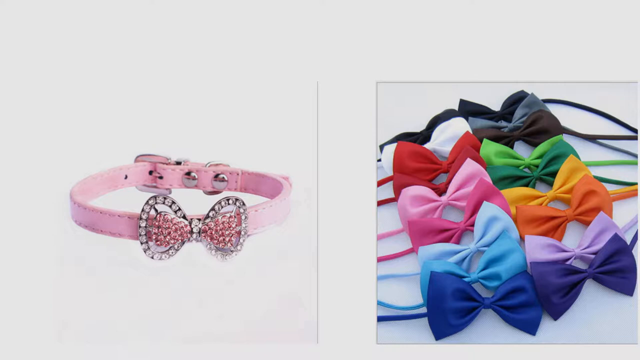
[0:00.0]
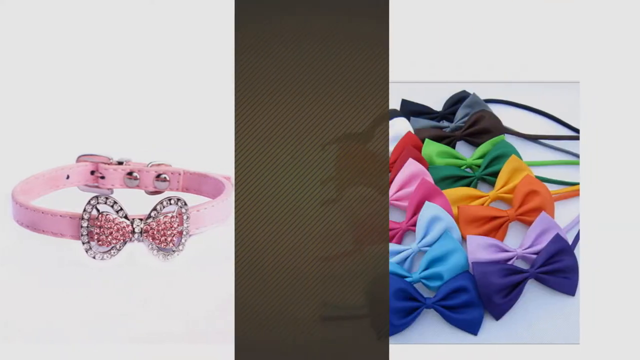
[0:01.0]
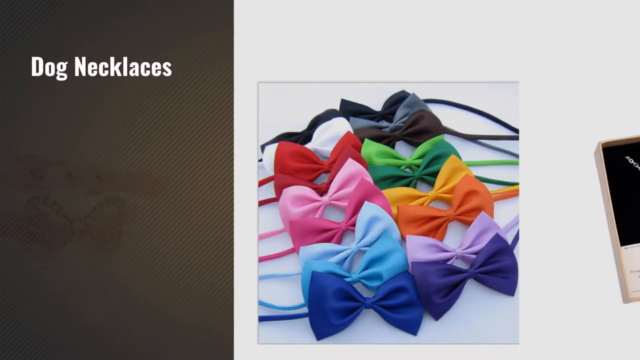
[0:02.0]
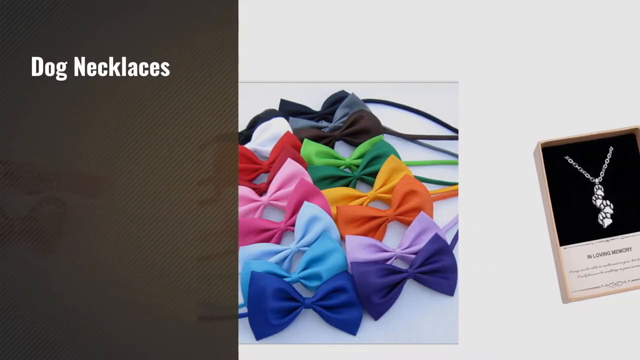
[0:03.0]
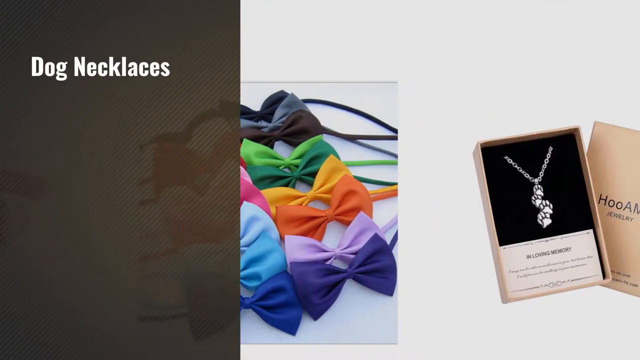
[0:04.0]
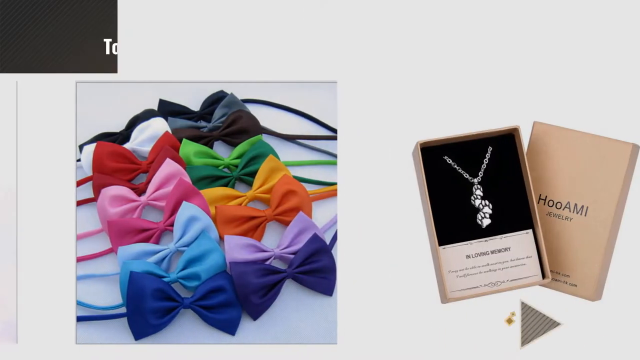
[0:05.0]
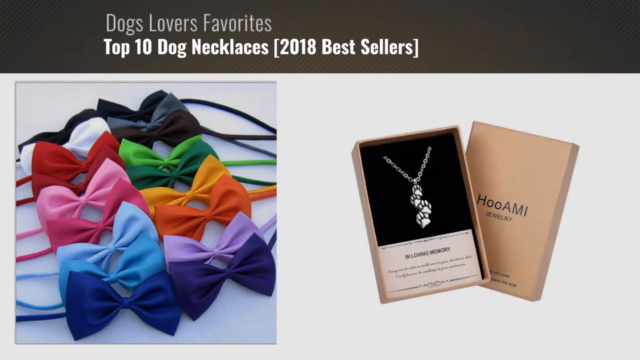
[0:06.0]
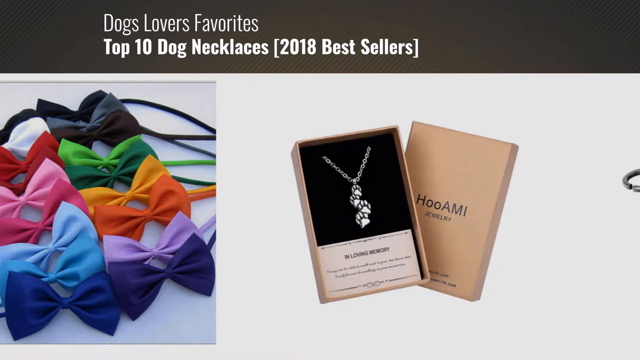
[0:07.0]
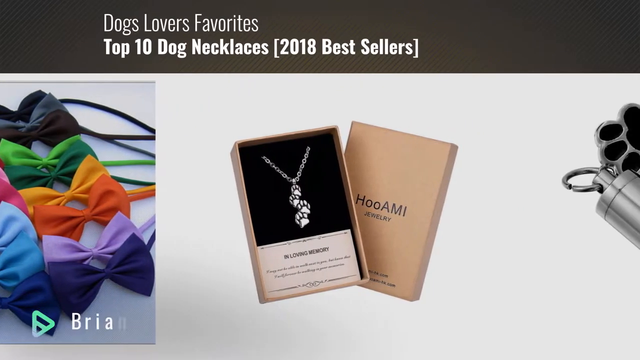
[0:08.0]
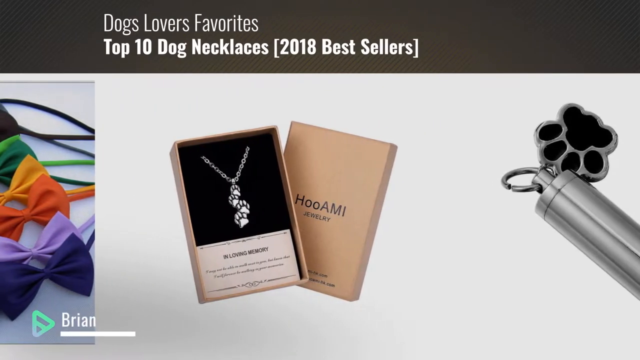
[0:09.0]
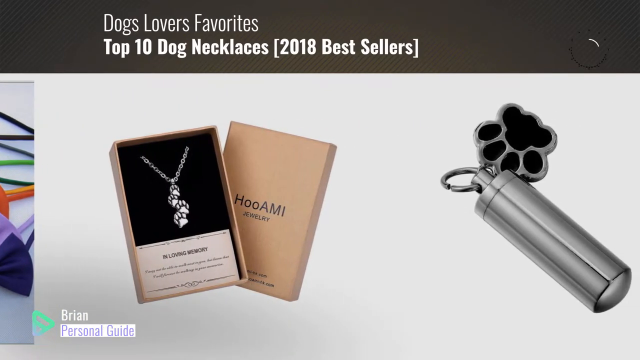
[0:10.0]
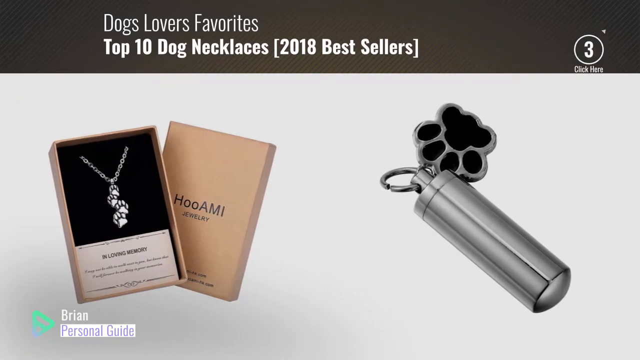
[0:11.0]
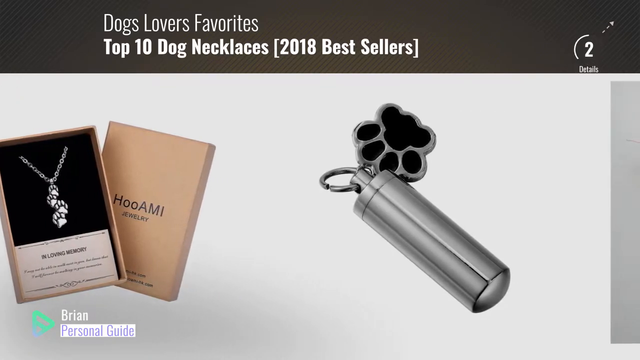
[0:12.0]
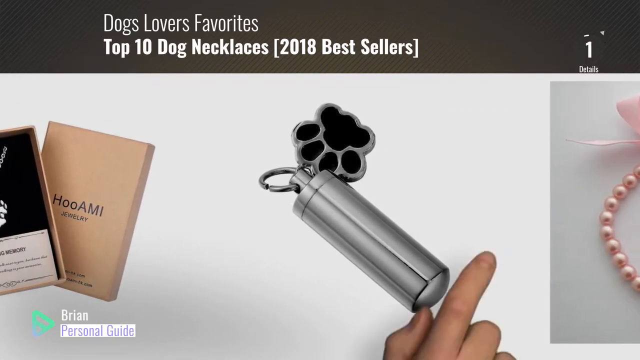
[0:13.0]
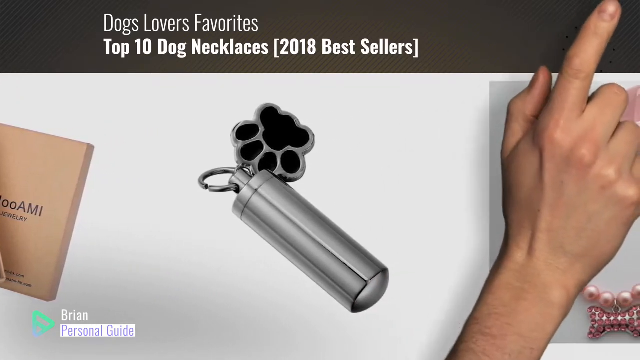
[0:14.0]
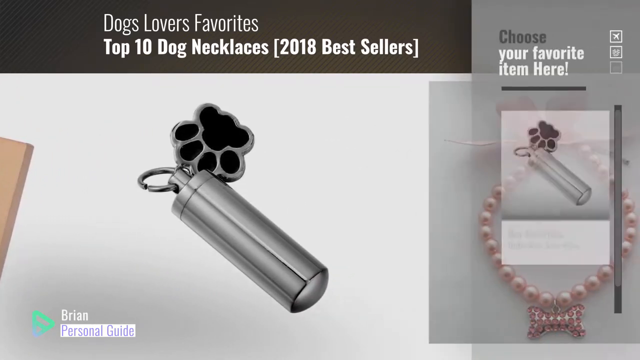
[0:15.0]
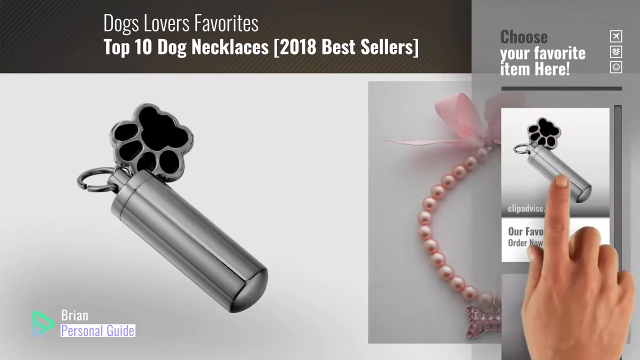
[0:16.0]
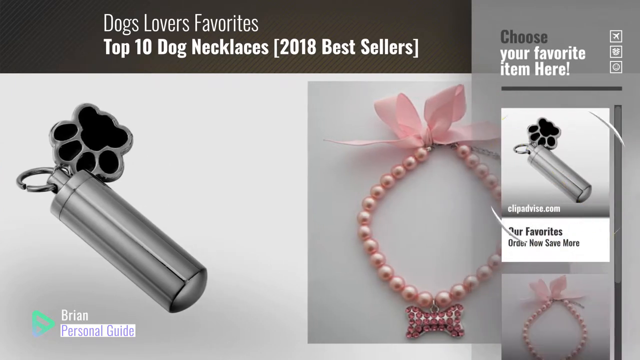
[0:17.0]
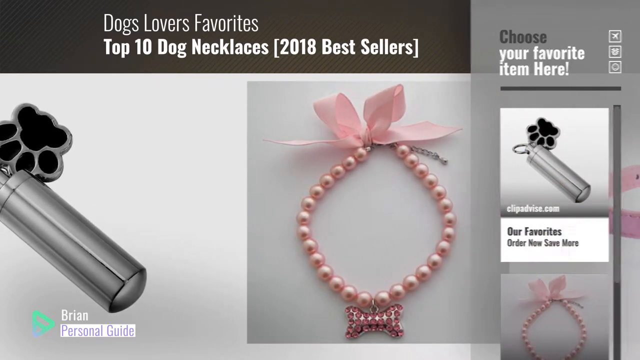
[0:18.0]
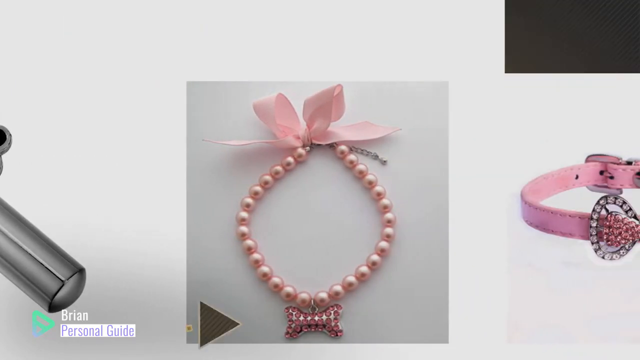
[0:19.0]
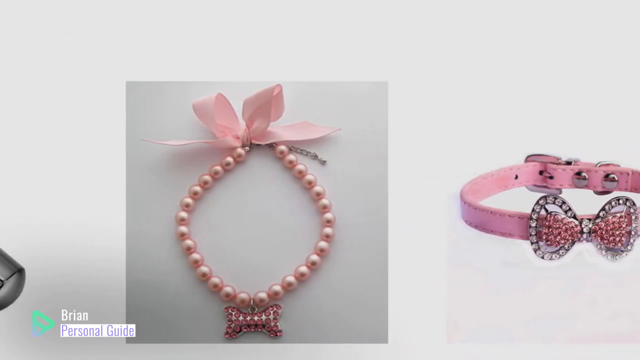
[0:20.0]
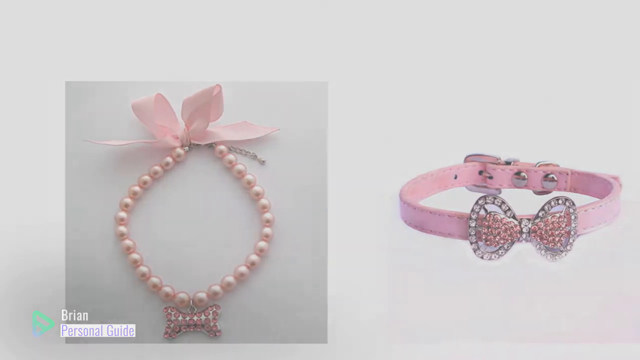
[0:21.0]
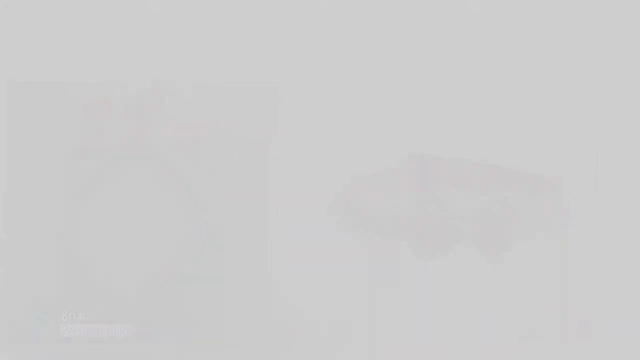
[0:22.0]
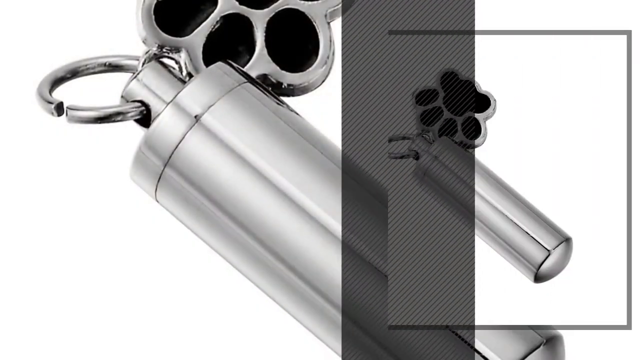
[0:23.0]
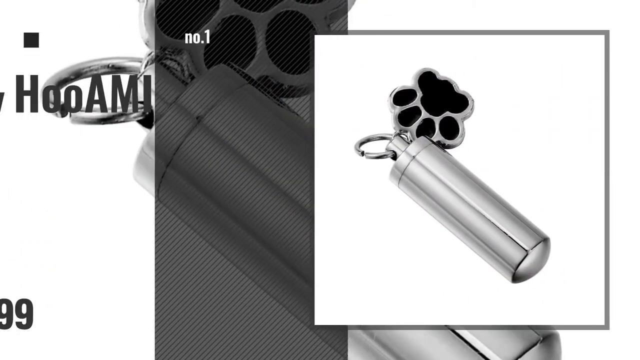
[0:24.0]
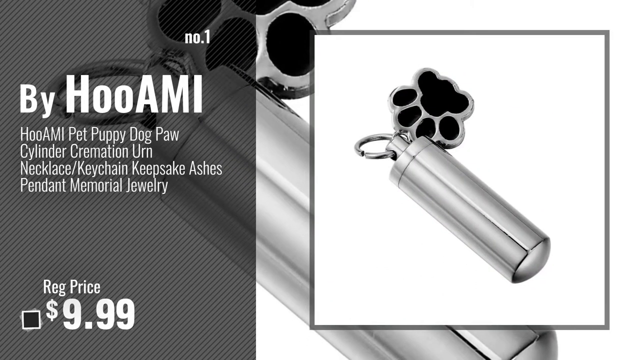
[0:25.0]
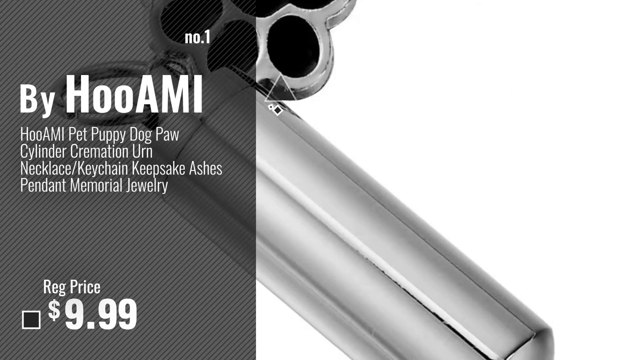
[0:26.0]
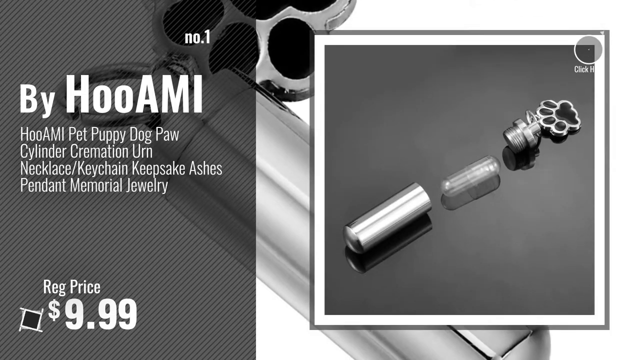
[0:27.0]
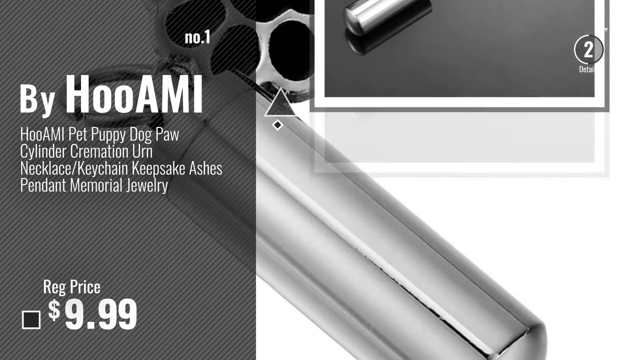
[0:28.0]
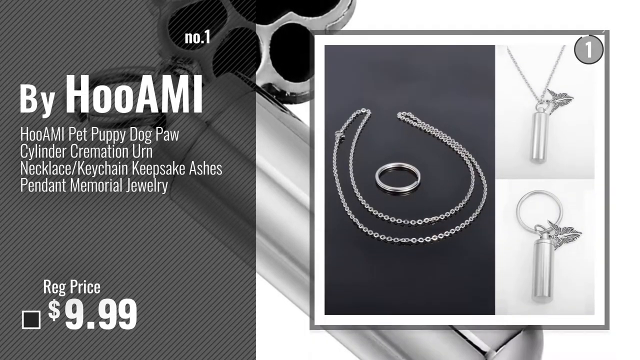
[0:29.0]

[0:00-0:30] A number of dog necklaces are displayed, scrolling across the screen. The first is a pink necklace with a diamante bow. Next comes an image of 16 bows in two rows of eight, in different colours, all moving from right to left across the screen. After the bows is a small silver dog necklace with a paw print charm on it, and the title on the screen says "Dog Lovers' Favourite Top 10 Dog Necklaces 2018 Bestsellers". Following the silver necklace is a mini canister with a paw print charm, and after that a pink pearl necklace with a pink ribbon. As the images scroll, a hand appears on the right-hand side and clicks the screen, and a box appears on the right saying "choose your favourite item here". The images scroll past again before fading out, and the clicked item is shown: the Hooami Pet Puppy Dog Paw Cylinder Cremation Urn Necklace.